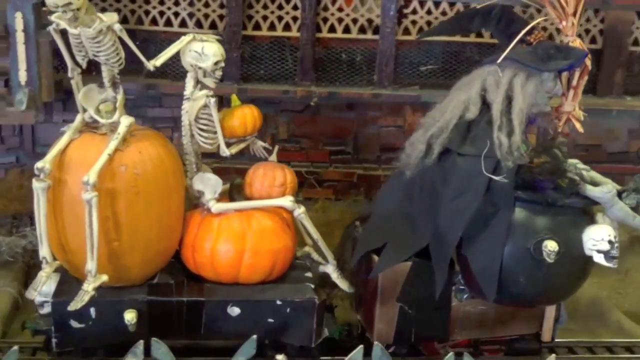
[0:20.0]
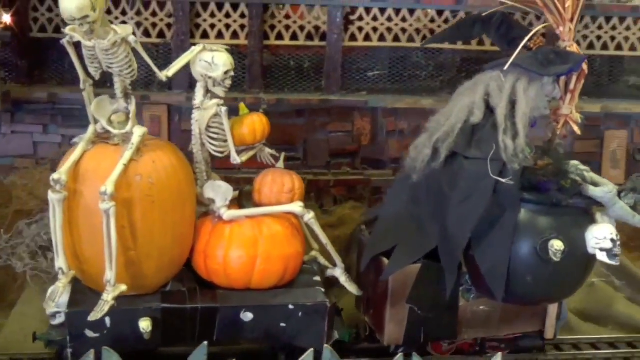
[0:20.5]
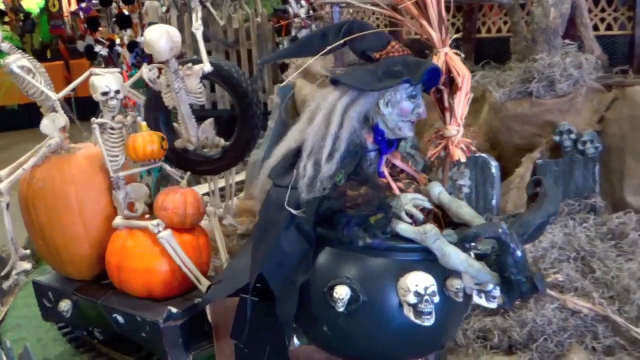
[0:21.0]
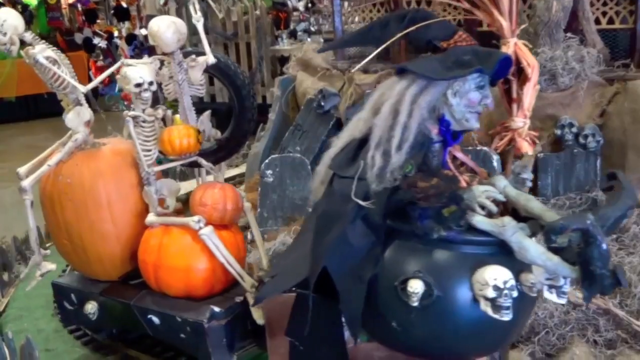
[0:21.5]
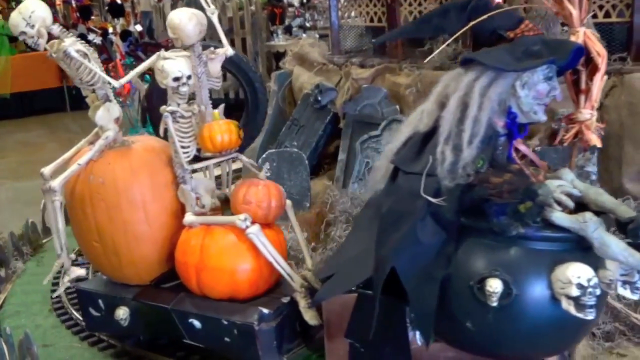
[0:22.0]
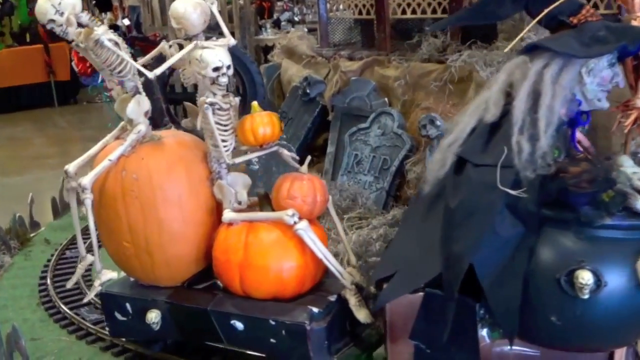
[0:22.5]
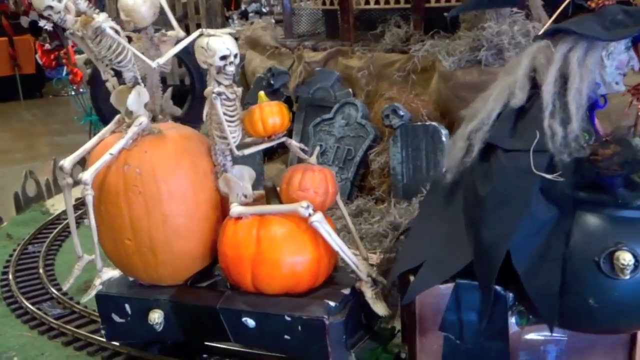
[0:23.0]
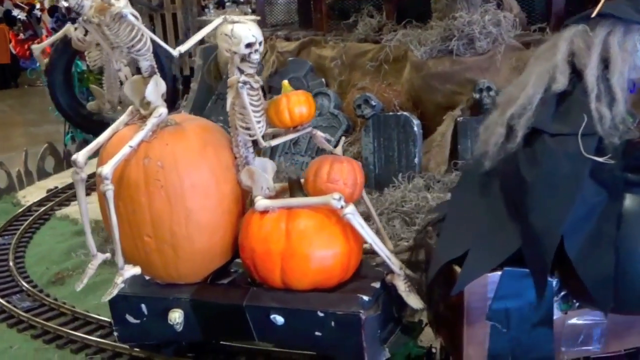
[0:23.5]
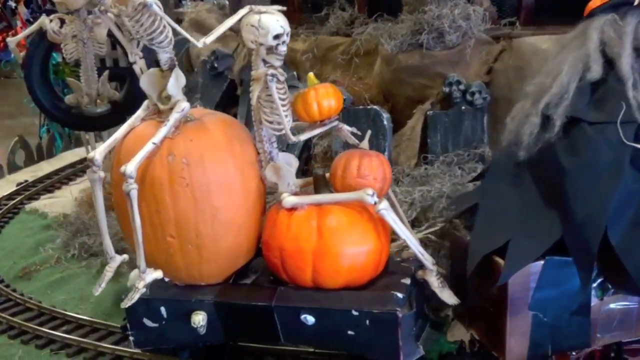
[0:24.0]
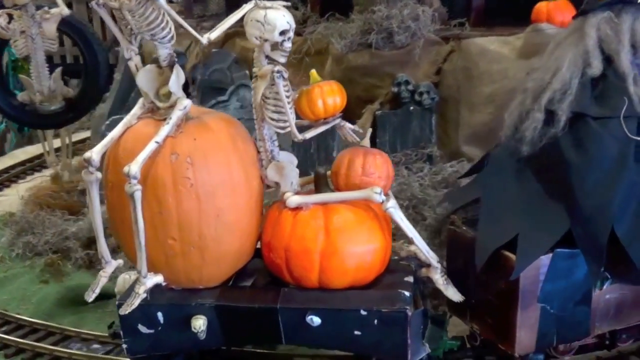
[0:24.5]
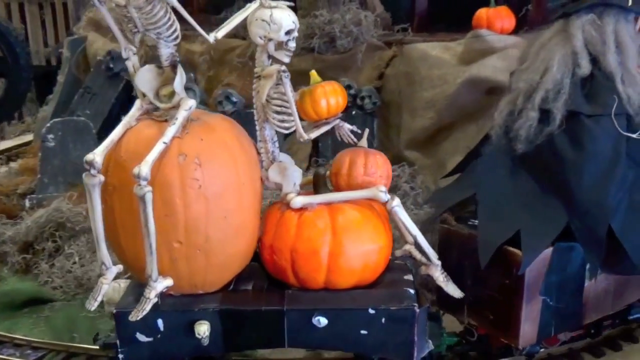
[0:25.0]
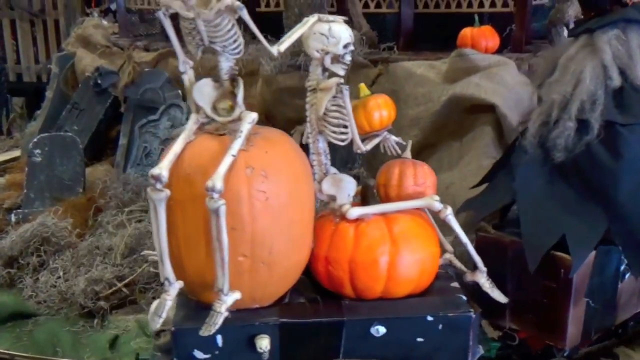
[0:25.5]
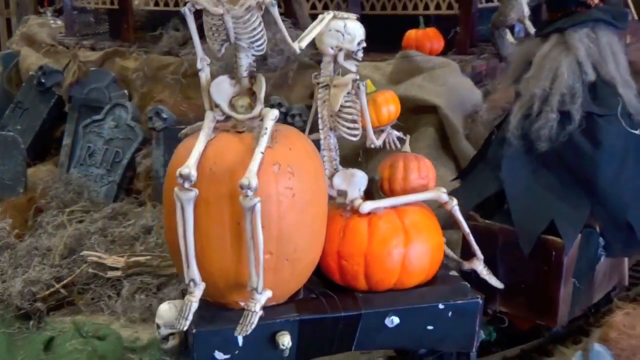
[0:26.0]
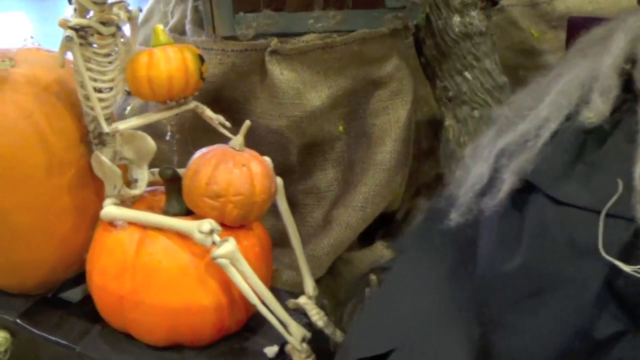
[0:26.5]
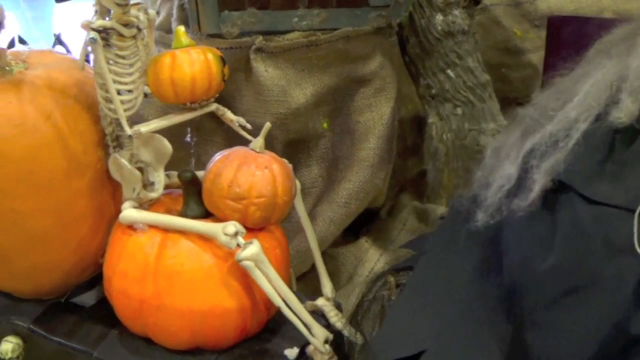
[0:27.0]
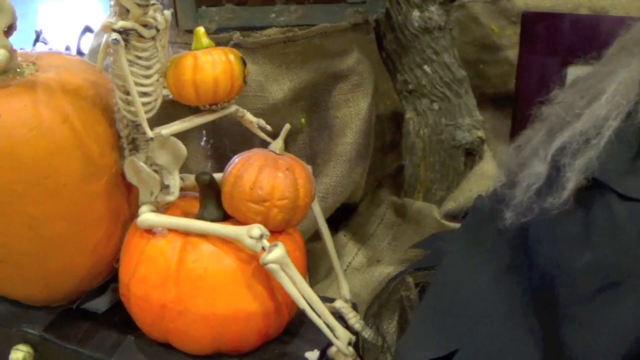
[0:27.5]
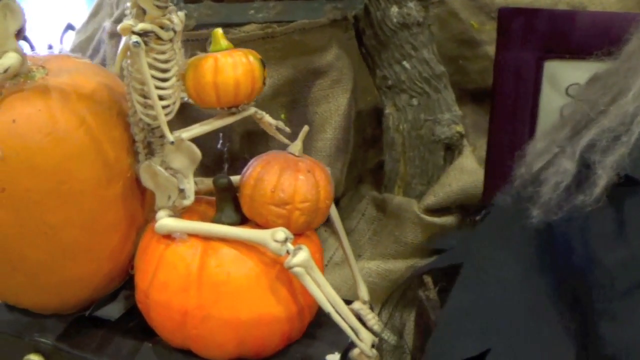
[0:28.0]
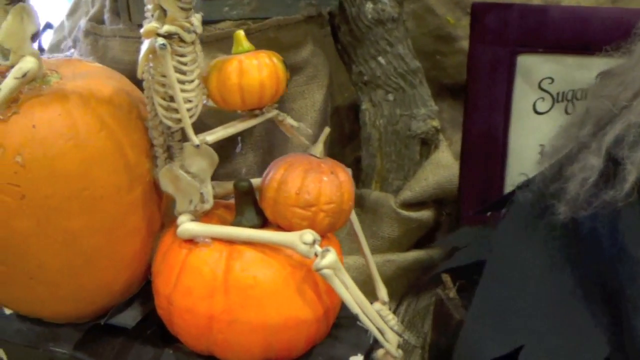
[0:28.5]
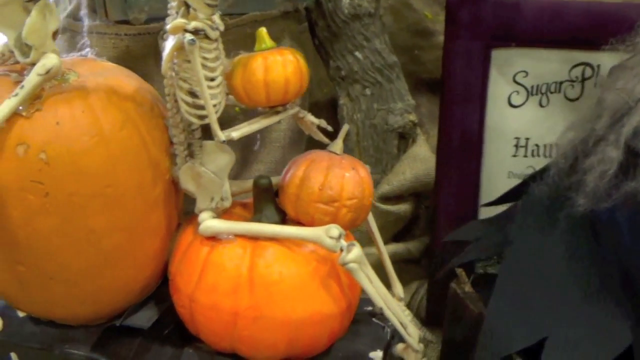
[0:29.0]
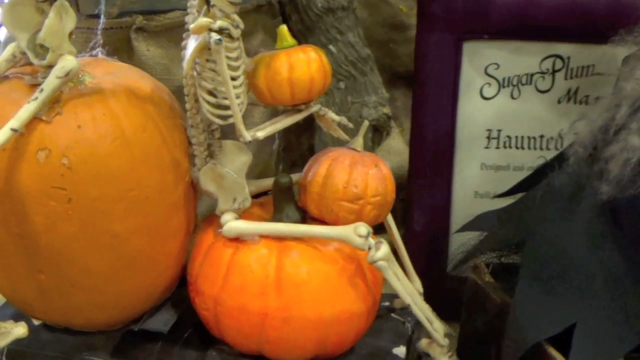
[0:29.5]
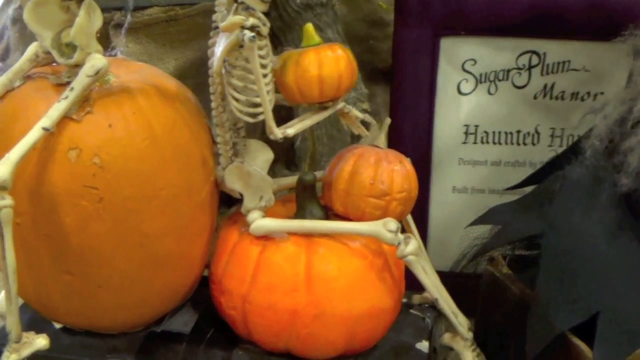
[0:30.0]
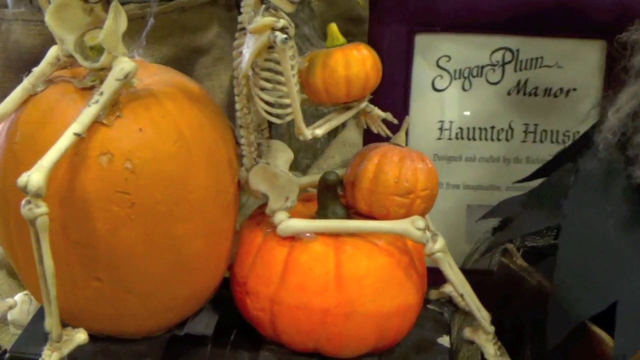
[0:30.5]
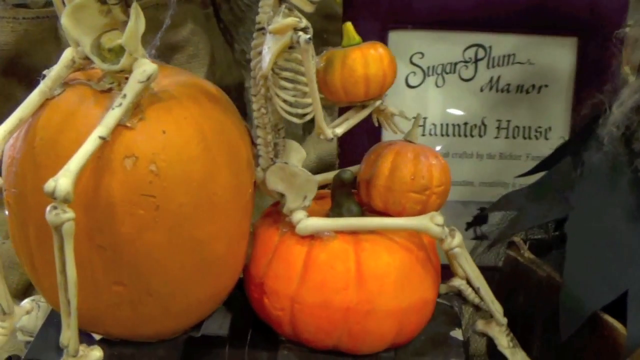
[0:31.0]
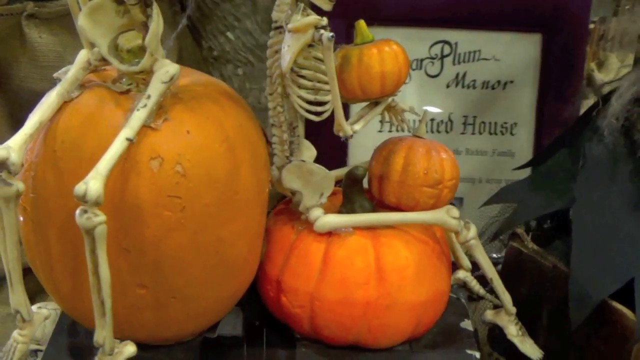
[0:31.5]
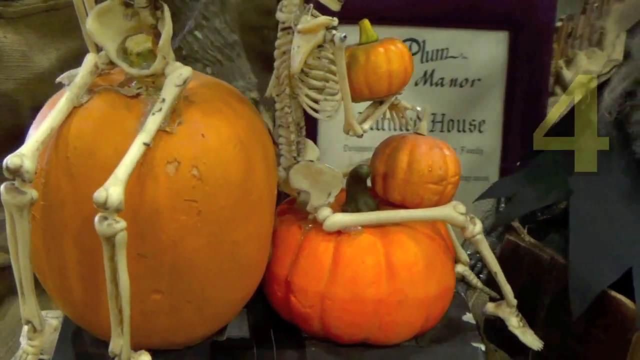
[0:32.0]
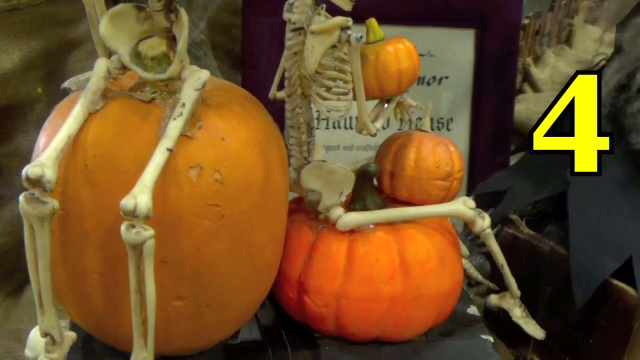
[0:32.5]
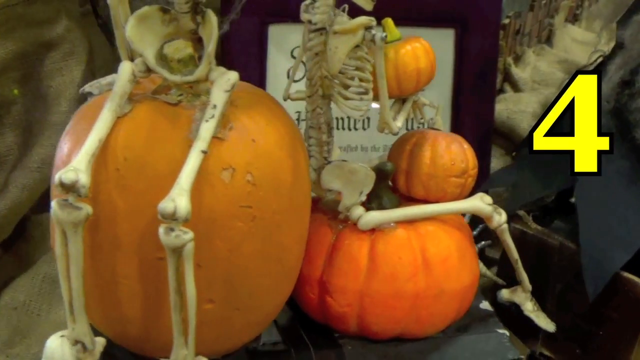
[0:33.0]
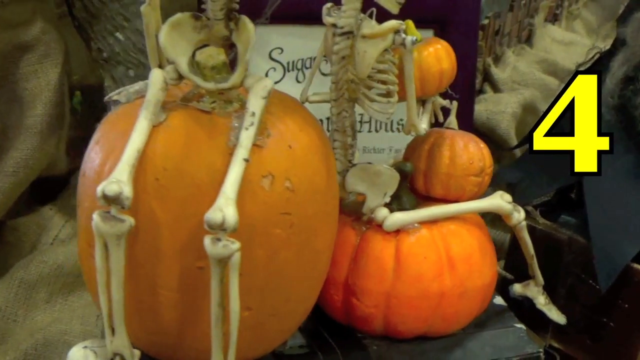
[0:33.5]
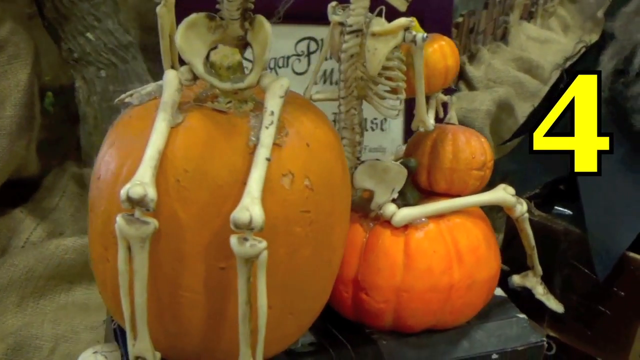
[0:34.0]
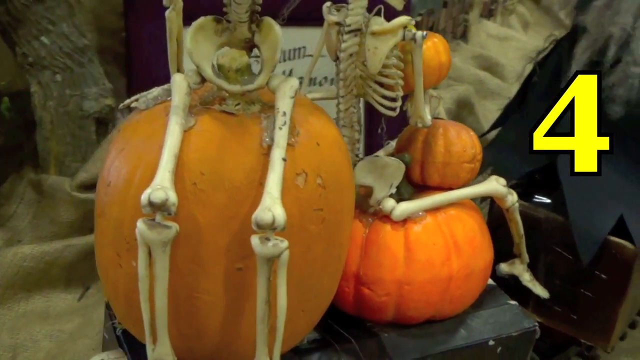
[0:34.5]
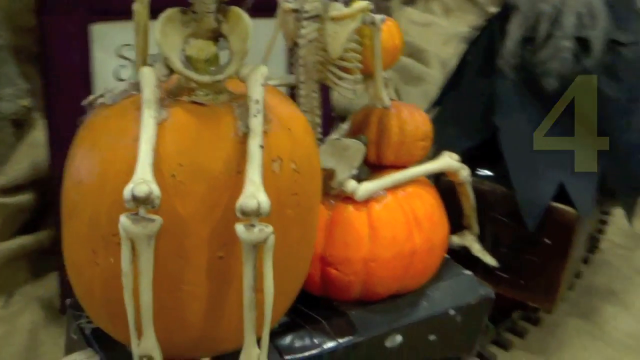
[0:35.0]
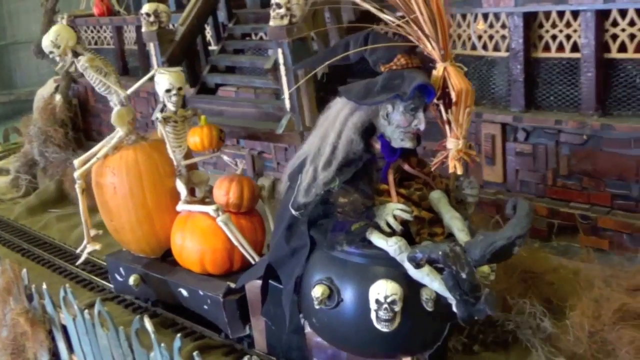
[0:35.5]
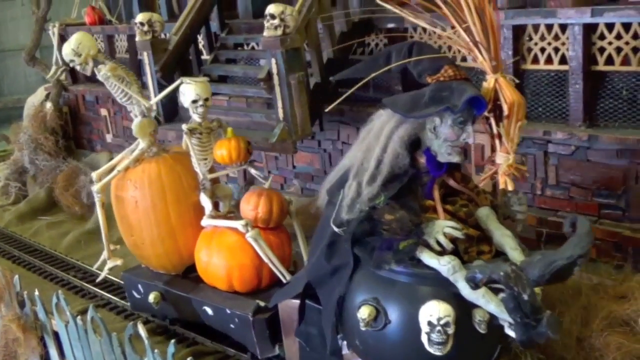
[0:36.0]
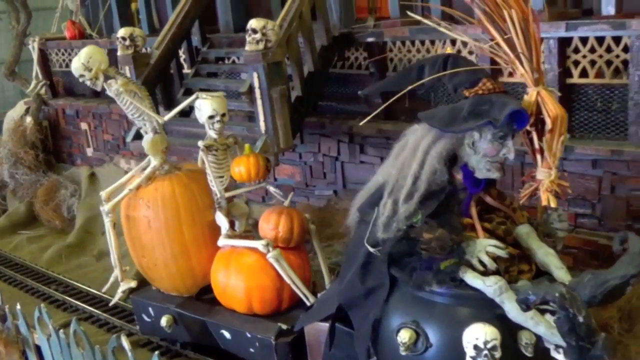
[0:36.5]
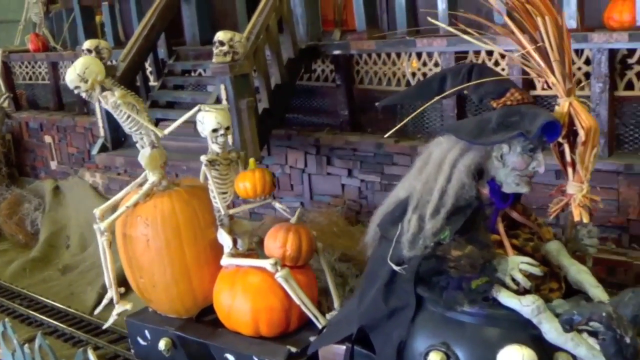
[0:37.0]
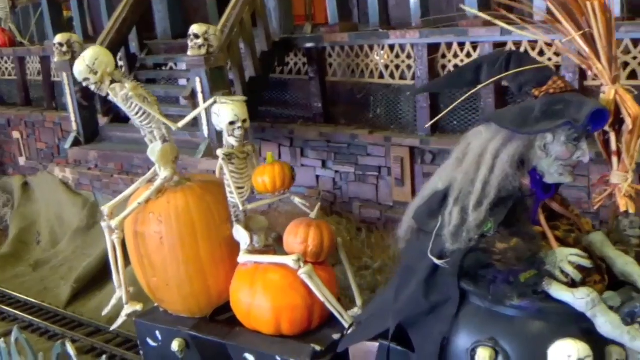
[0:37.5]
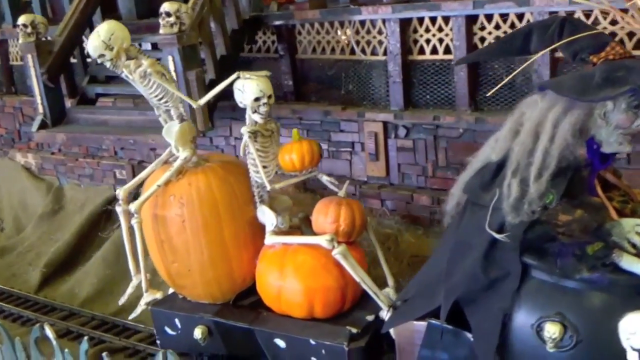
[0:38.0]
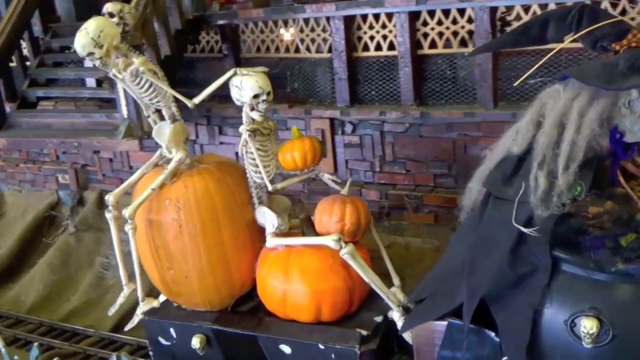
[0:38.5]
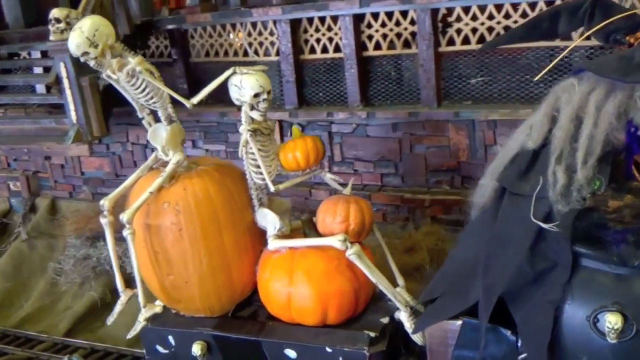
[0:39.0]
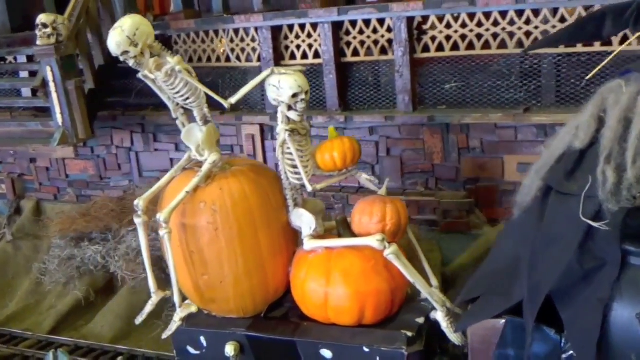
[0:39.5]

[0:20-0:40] As the train goes by, its second car looks like a coffin, with two pumpkins on top. The front pumpkin is smaller, and a skeleton sits on it with another pumpkin in his lap, cradling another pumpkin in his arms. A larger pumpkin is on the back of the coffin car, with a skeleton sitting on it as well, facing backwards. This skeleton's left hand rests on the head of the skeleton sitting in front of it, and his legs dangle off the side, swaying a little as the train moves. Some tombstones are in the background behind him. The view then zooms in close on the pumpkins, perhaps as if inviting viewers to count them. A sign in the background reads "Sugar Plum Manor Haunted House."